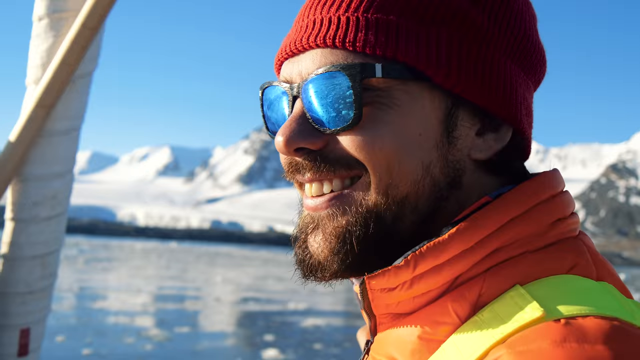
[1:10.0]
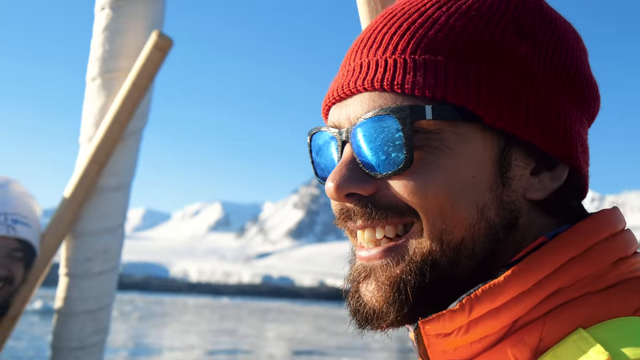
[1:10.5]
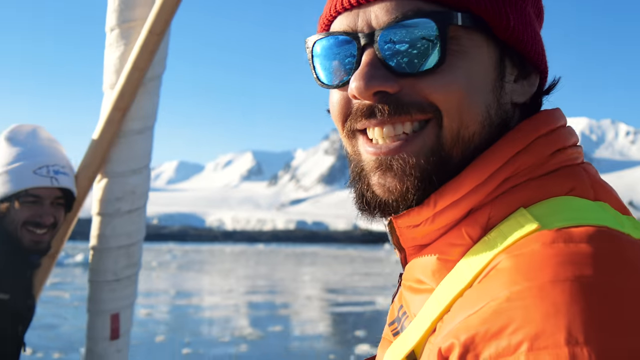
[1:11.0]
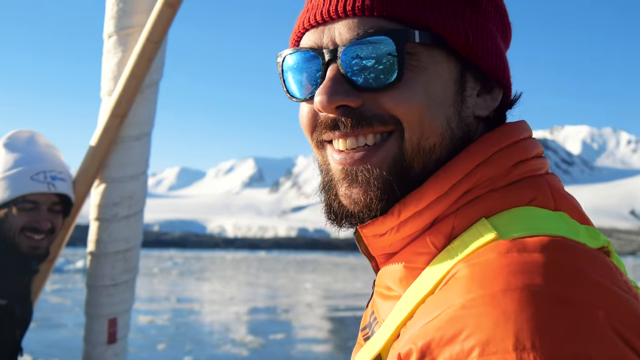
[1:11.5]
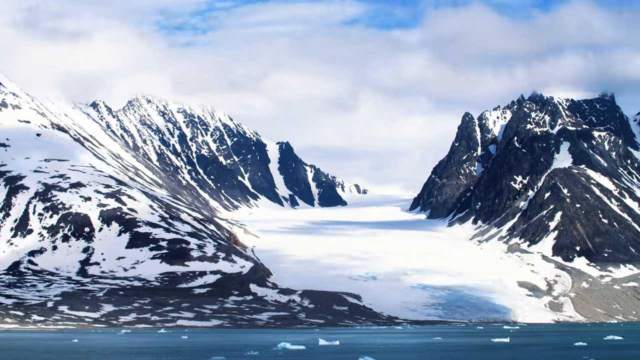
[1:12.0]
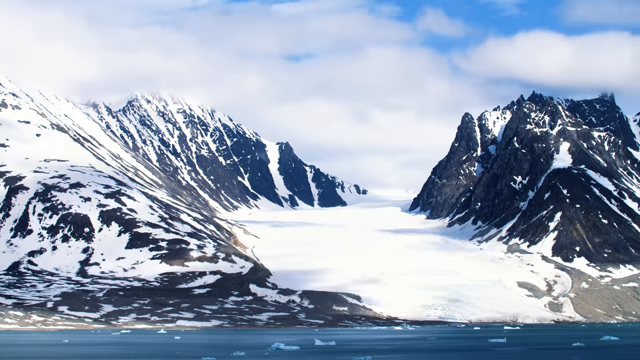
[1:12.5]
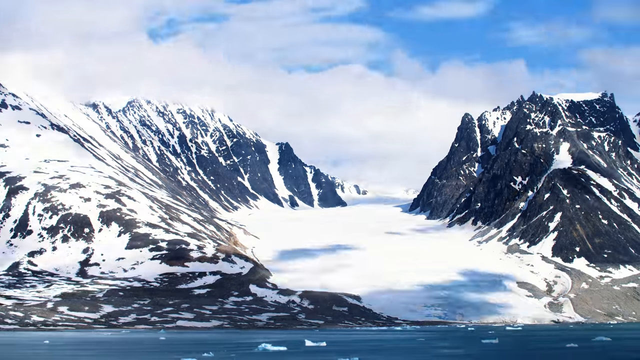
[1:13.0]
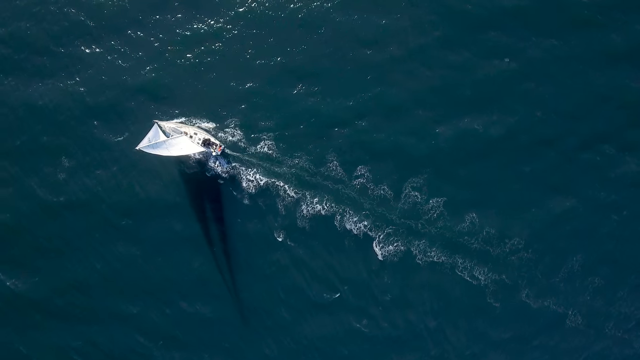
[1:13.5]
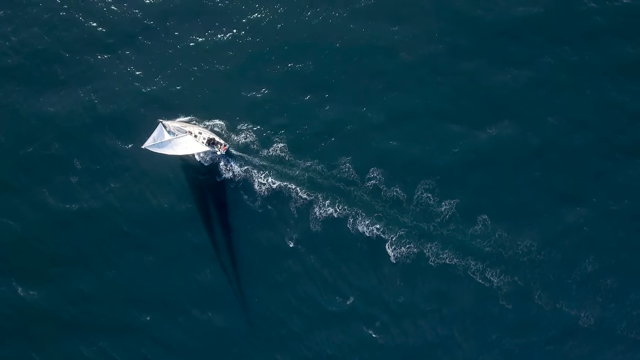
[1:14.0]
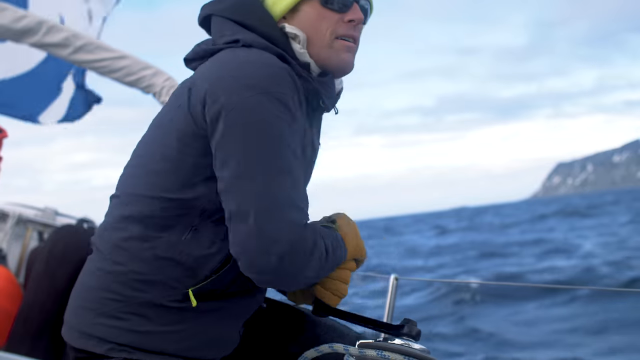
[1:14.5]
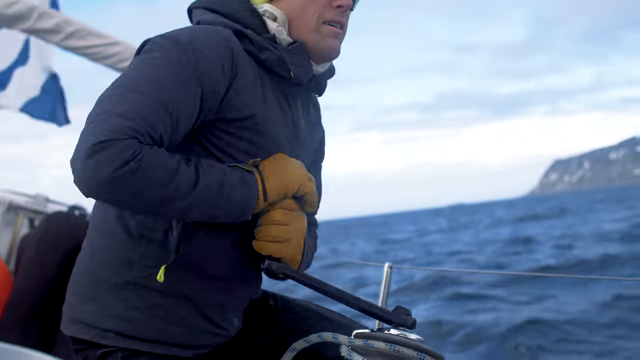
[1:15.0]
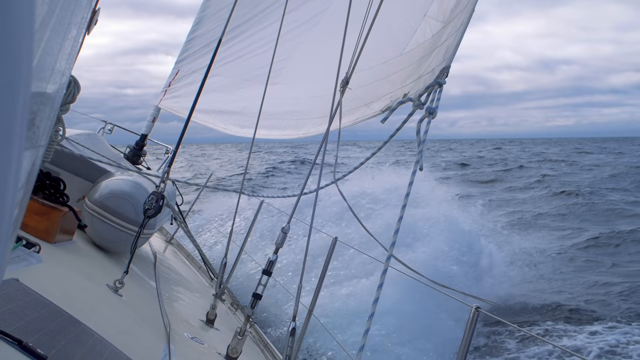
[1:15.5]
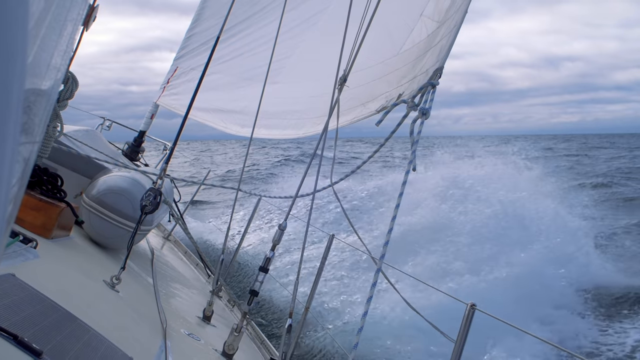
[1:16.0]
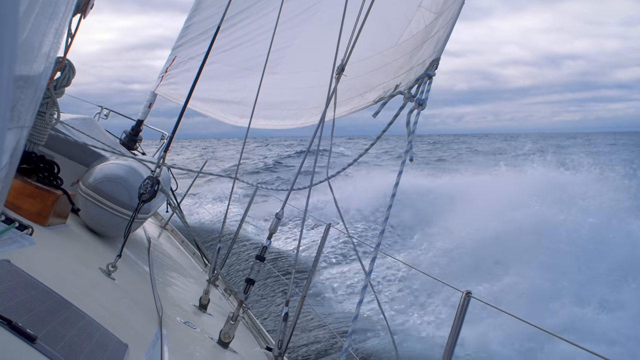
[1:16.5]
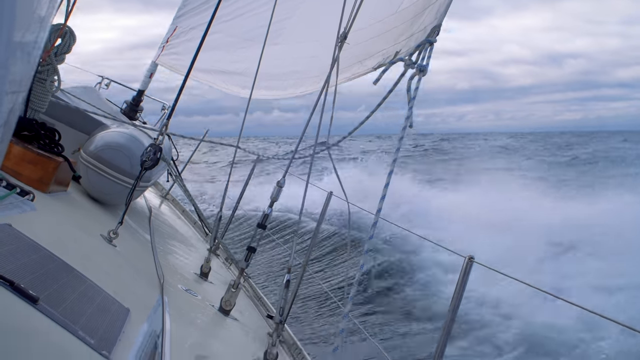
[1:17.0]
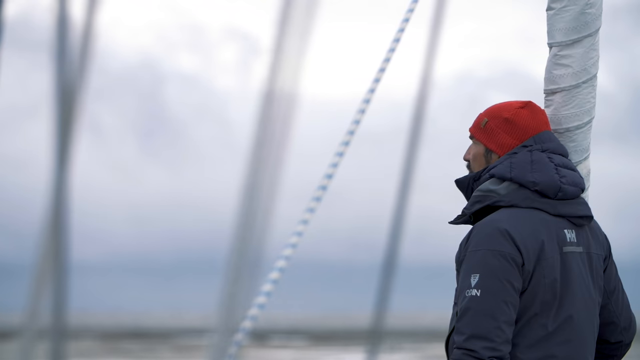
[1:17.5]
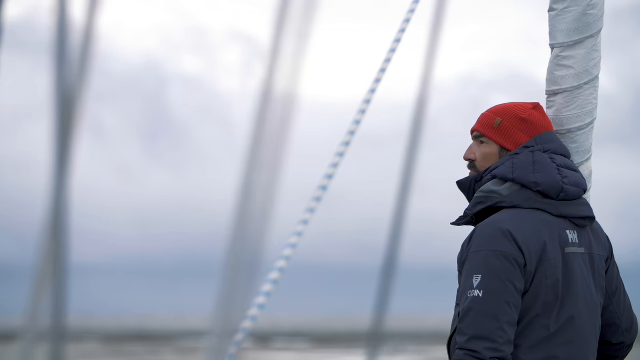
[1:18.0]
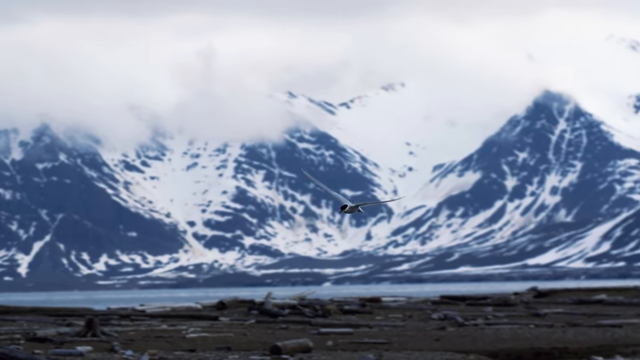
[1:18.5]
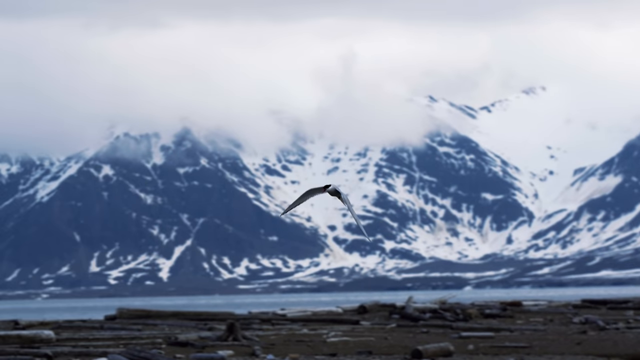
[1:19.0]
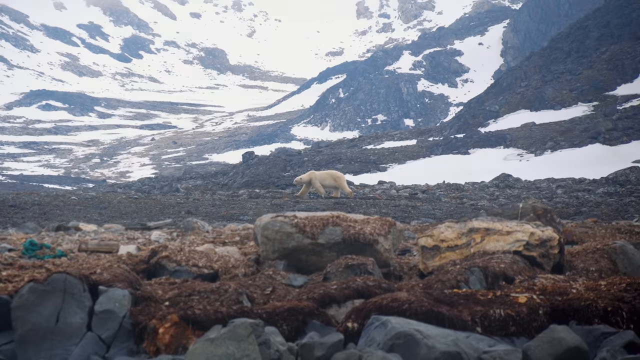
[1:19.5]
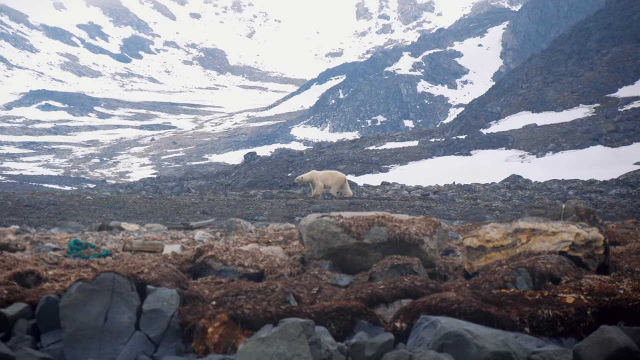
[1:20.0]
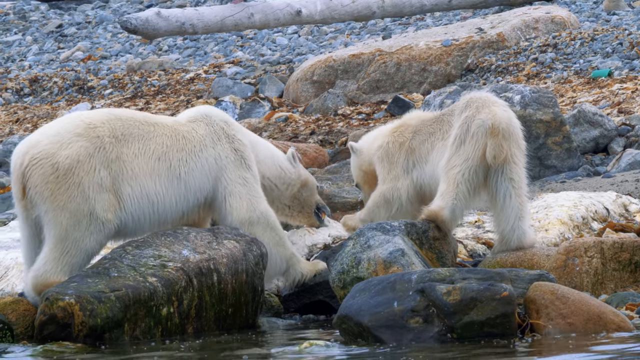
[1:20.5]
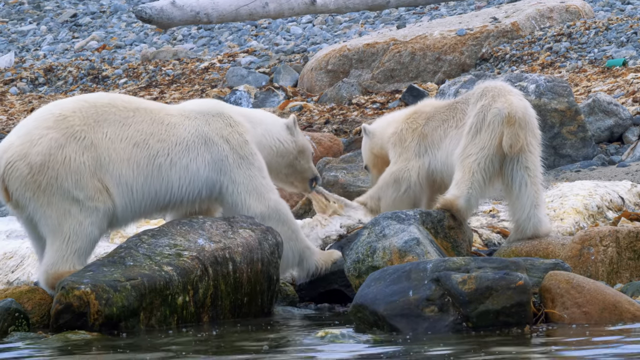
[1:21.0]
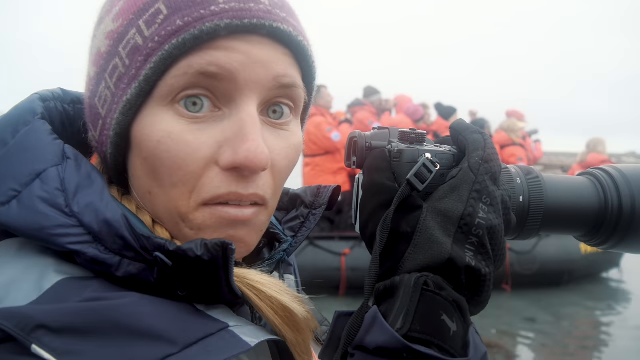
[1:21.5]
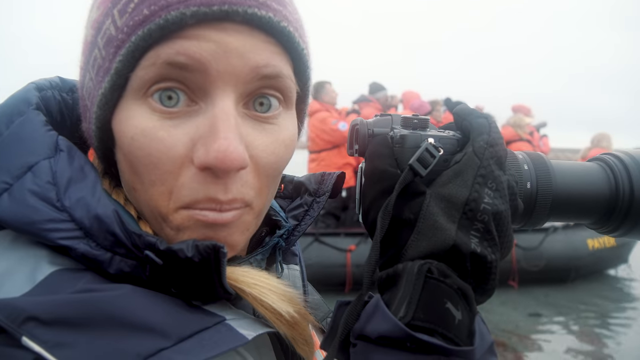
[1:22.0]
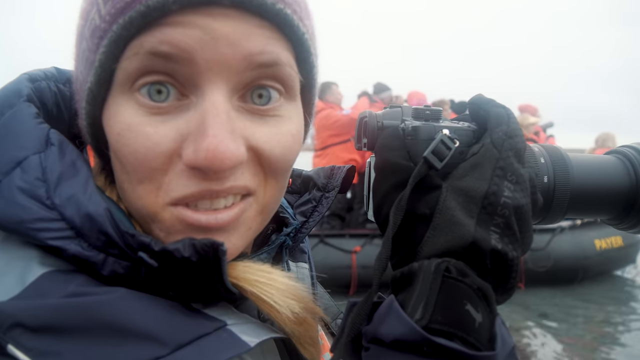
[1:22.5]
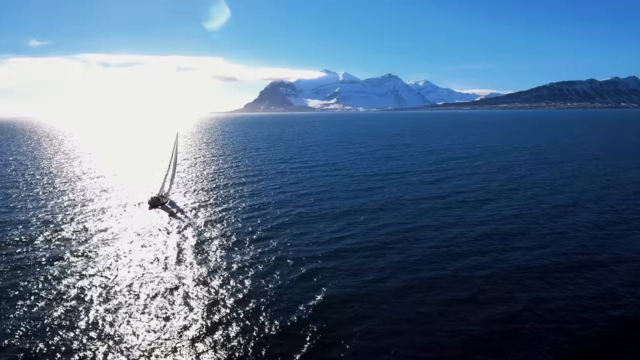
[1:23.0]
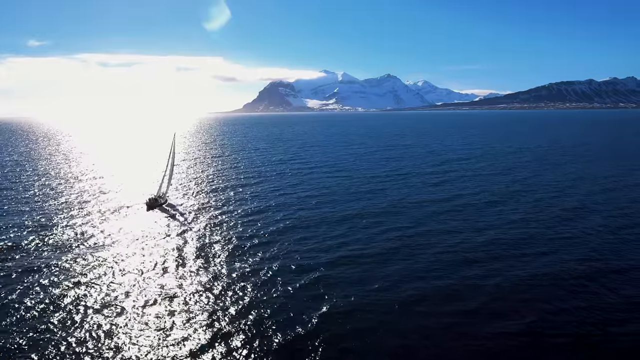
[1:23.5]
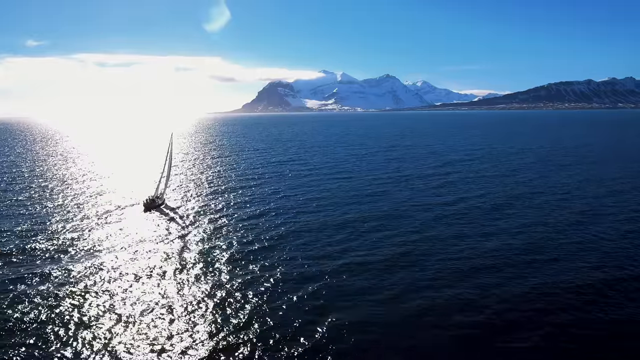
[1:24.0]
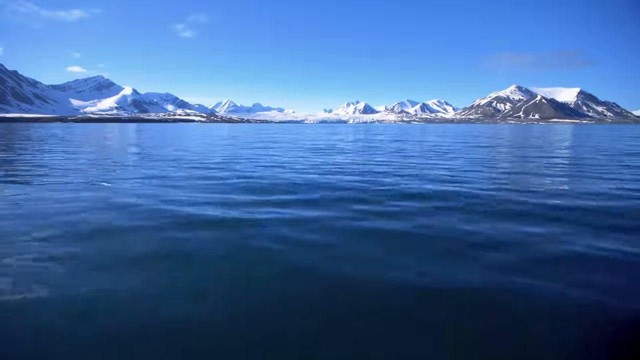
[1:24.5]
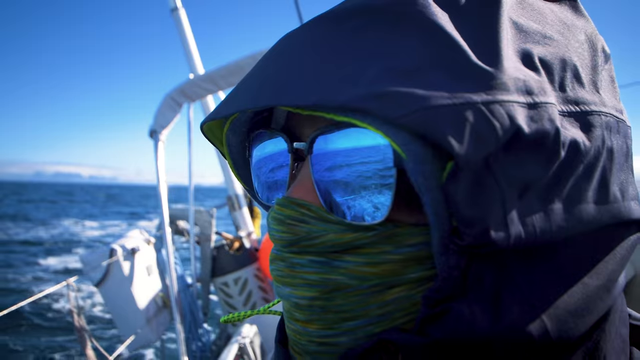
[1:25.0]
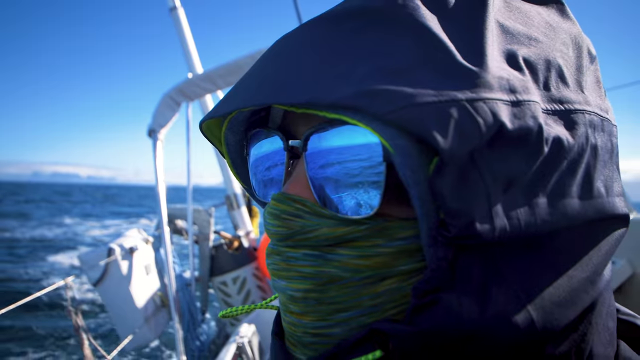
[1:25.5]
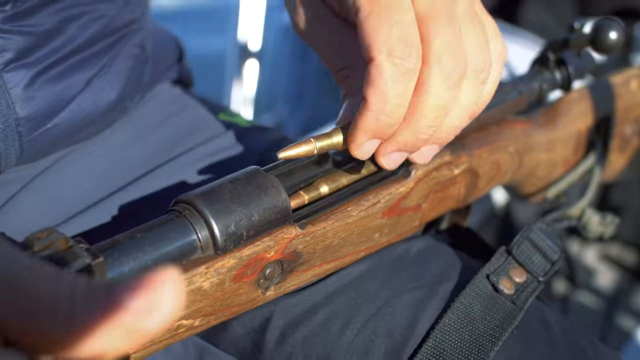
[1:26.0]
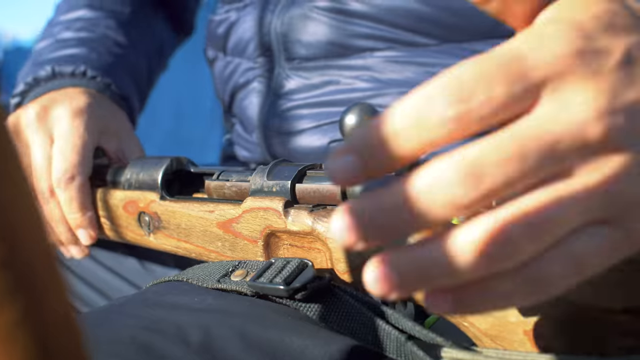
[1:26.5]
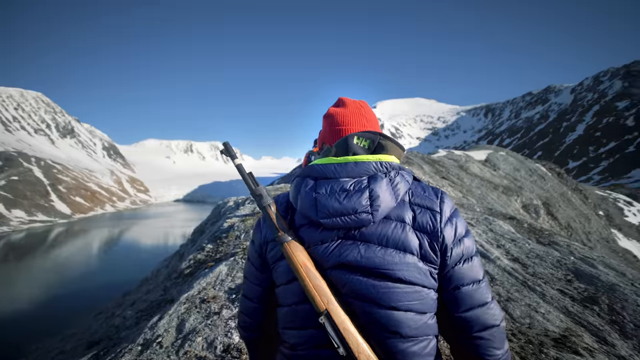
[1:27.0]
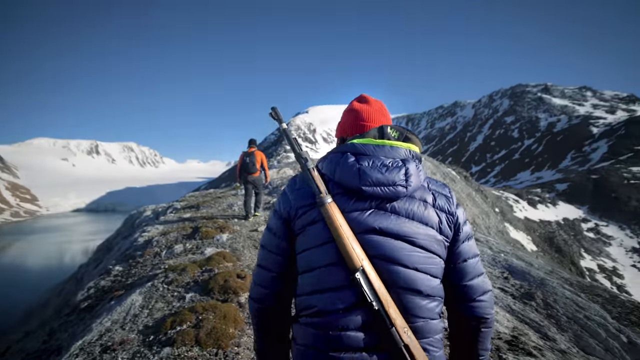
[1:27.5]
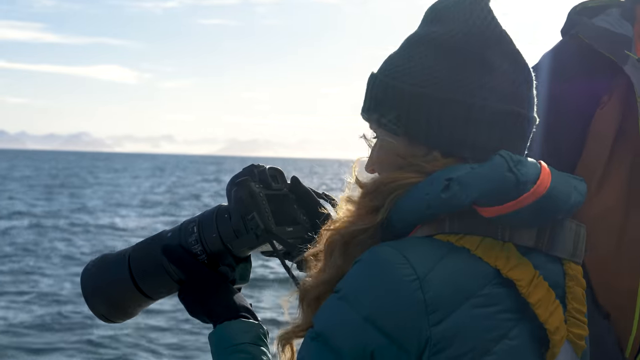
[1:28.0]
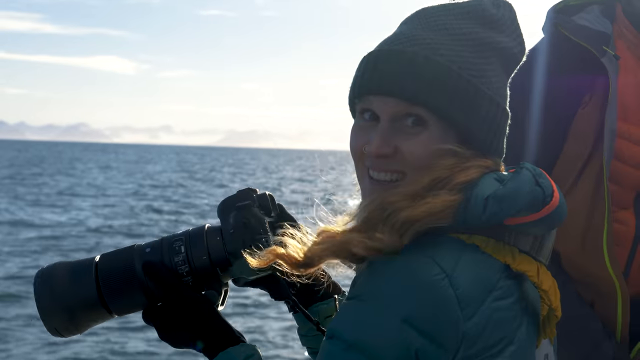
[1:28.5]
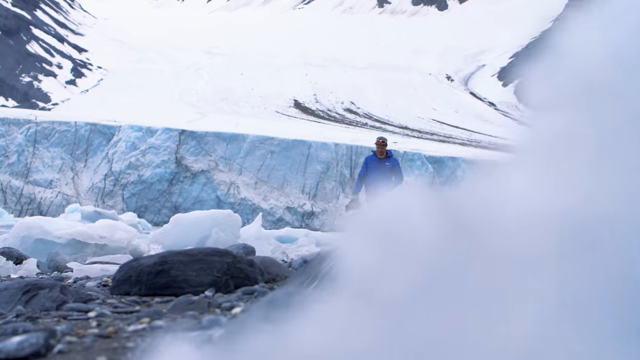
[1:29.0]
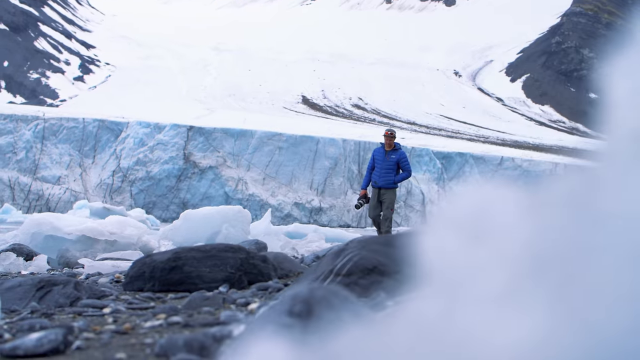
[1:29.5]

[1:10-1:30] A guy outside watches melting glaciers. A boat is sailed in very rough sea. A bird that looks like a seagull flies by. Polar bears are on land where the snow has melted, apparently eating an animal. Someone else sailing wears glasses that reflect the water. A walrus is beached on land. A guy on the sailboat cranks a winch to adjust the sails. A girl with a camera takes a picture of the polar bears, then turns to the camera and says something. Men walk with rifles on their backs, and another man walks along the shore holding something.